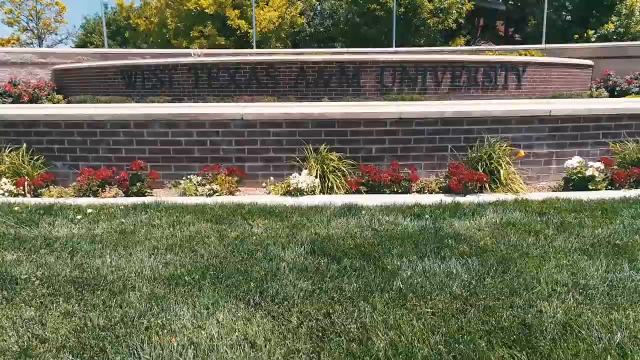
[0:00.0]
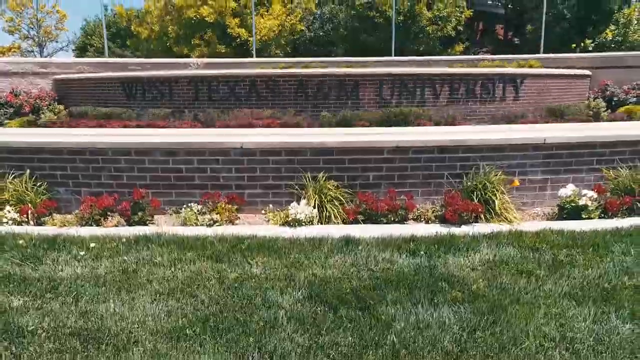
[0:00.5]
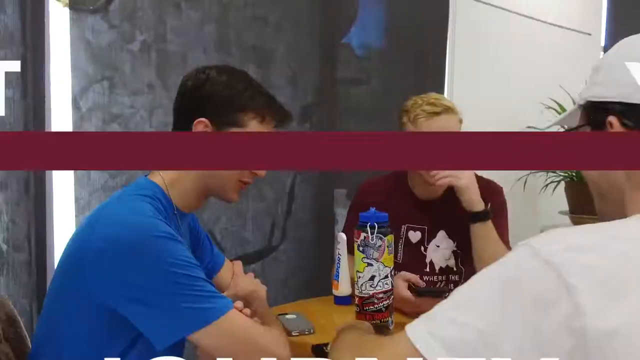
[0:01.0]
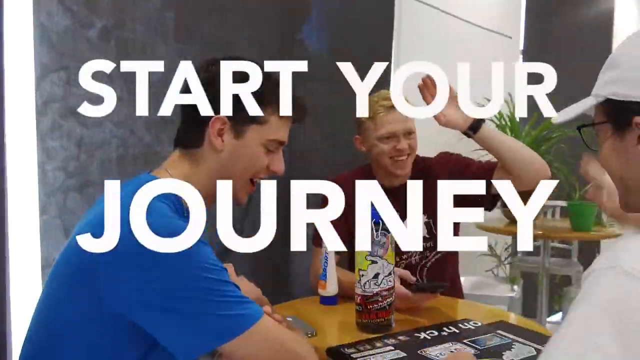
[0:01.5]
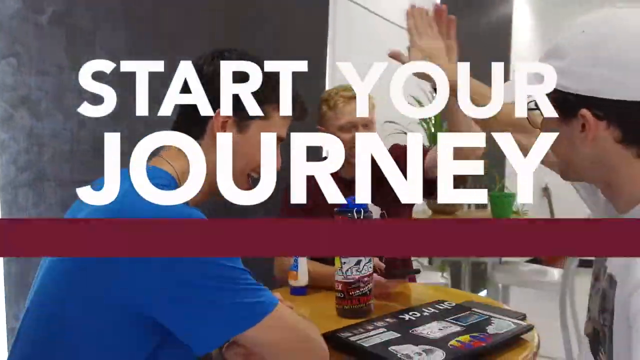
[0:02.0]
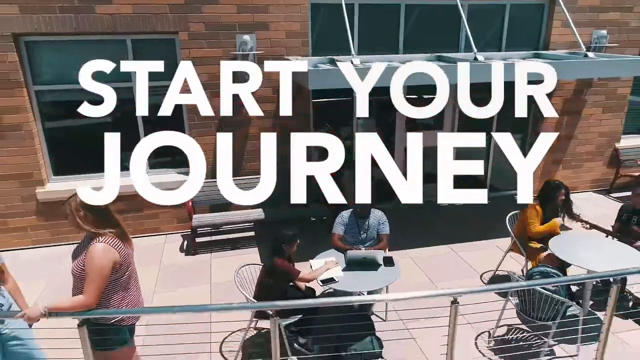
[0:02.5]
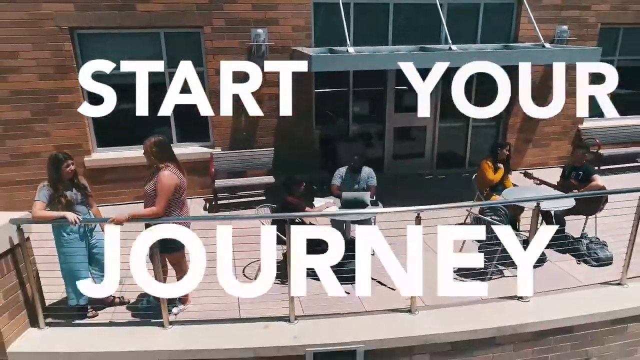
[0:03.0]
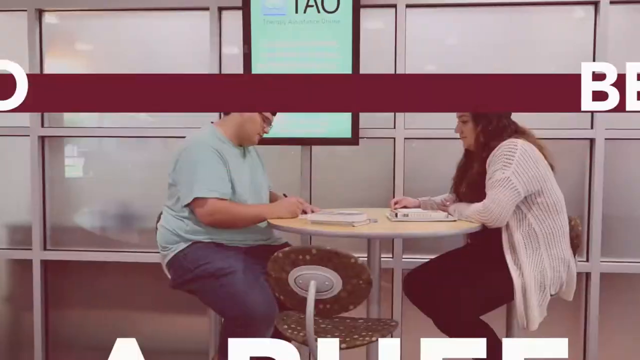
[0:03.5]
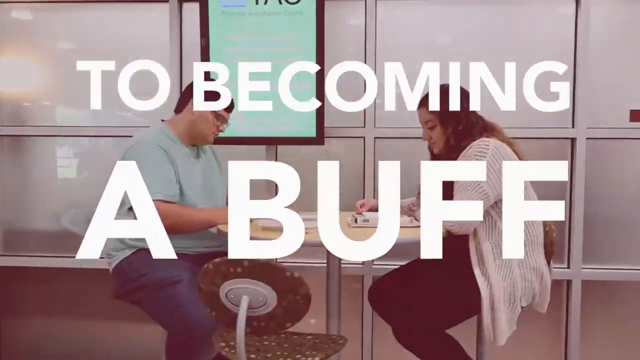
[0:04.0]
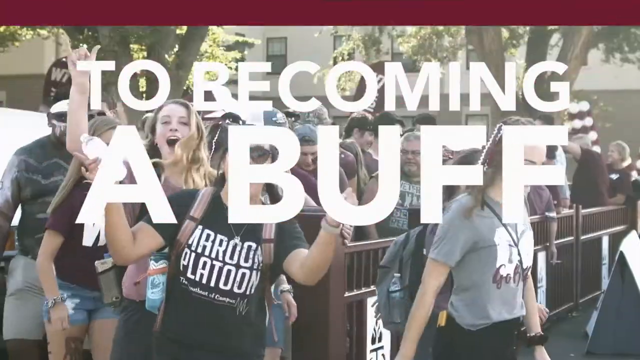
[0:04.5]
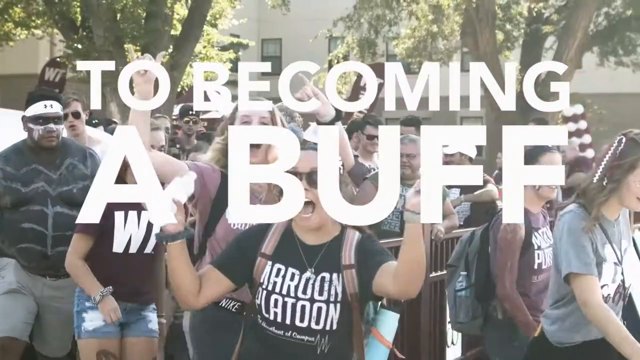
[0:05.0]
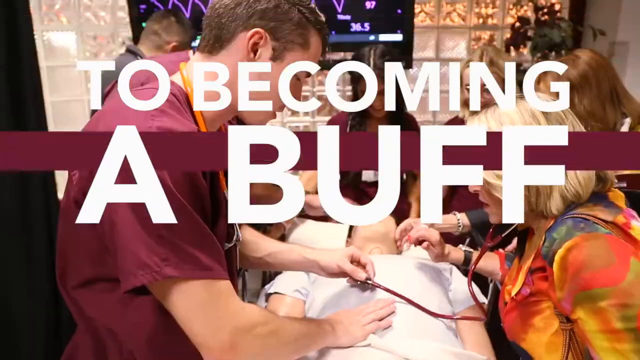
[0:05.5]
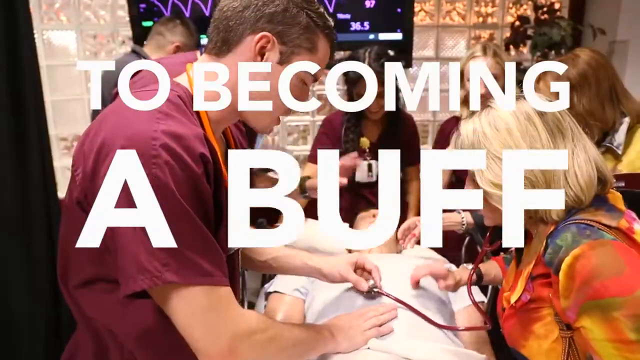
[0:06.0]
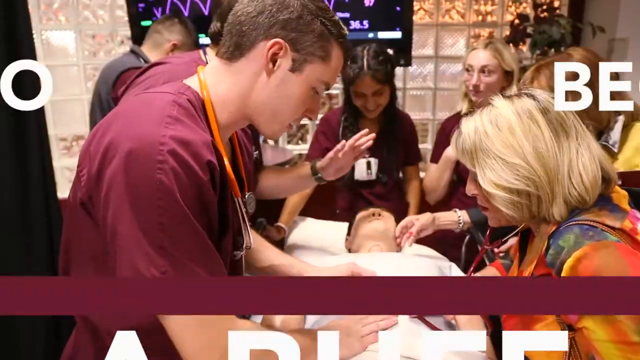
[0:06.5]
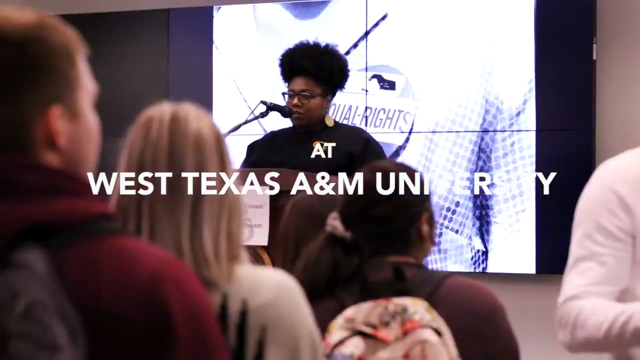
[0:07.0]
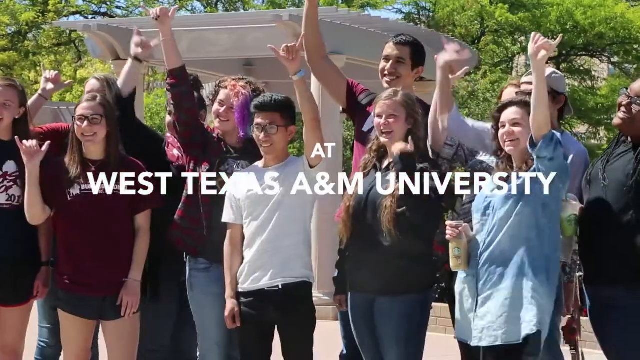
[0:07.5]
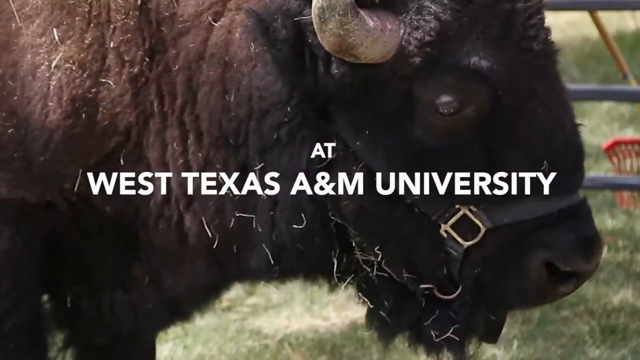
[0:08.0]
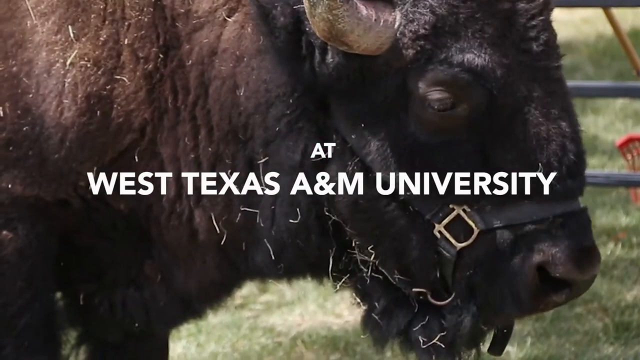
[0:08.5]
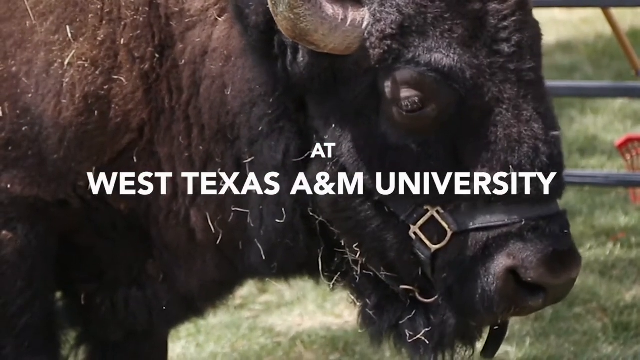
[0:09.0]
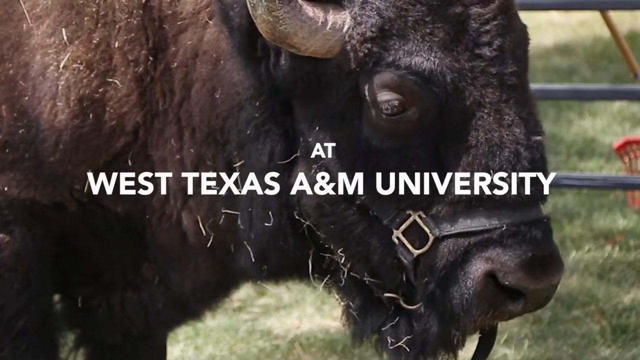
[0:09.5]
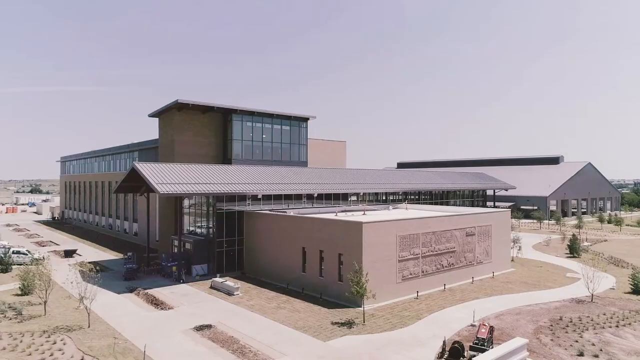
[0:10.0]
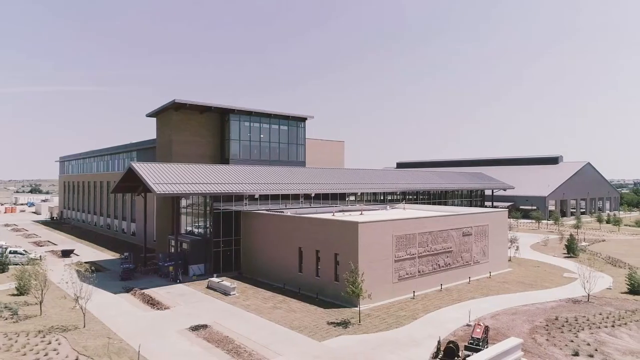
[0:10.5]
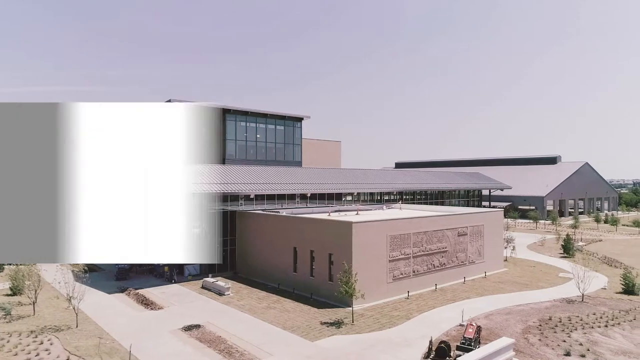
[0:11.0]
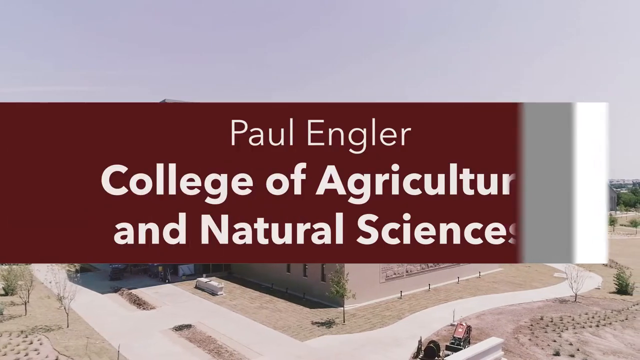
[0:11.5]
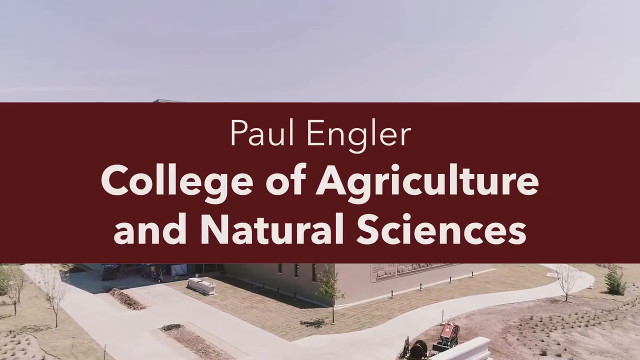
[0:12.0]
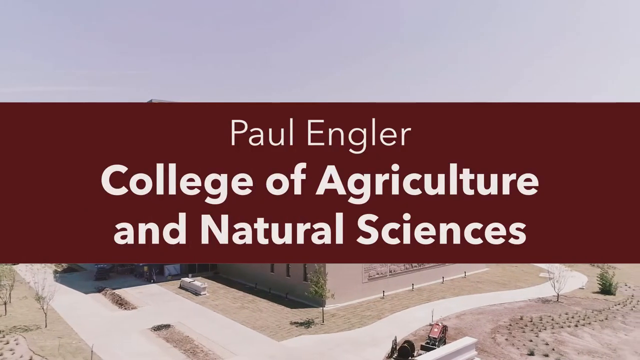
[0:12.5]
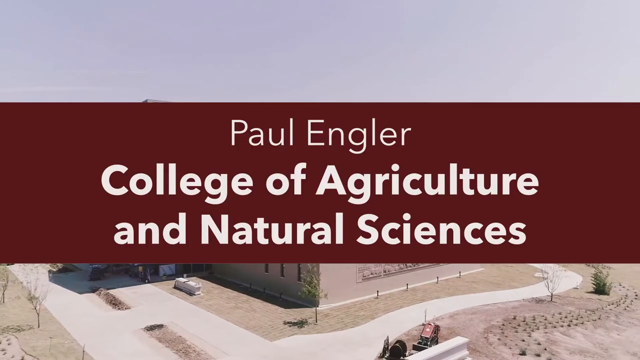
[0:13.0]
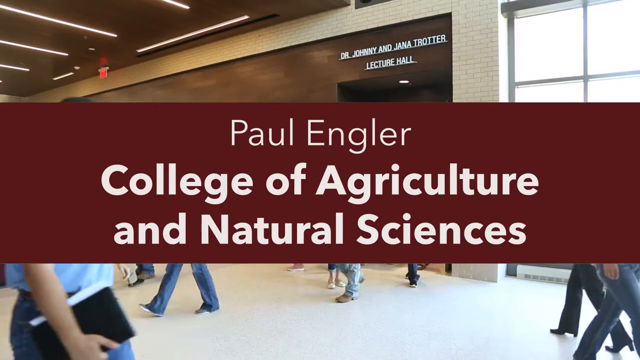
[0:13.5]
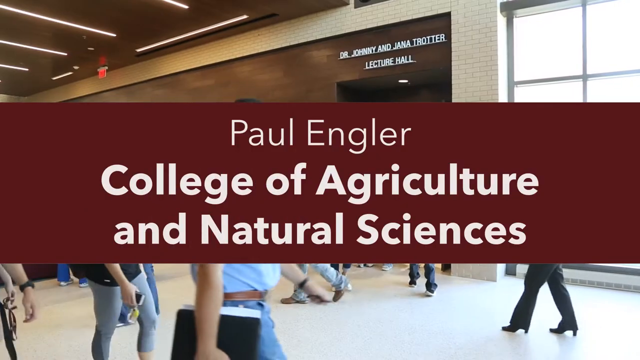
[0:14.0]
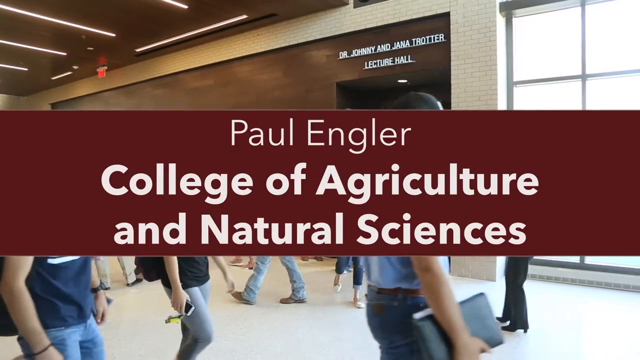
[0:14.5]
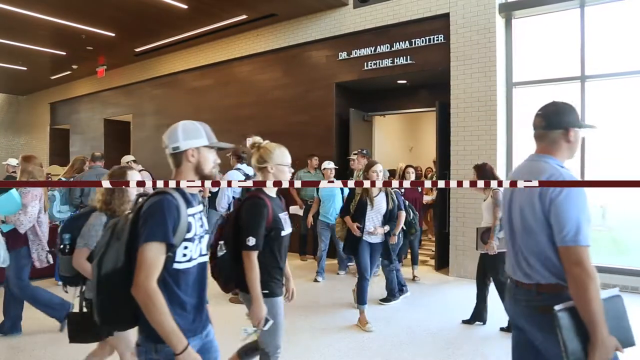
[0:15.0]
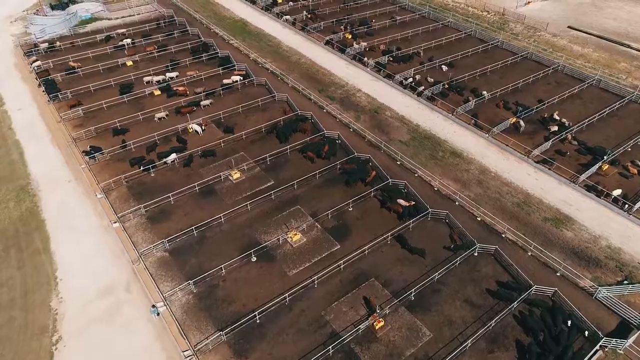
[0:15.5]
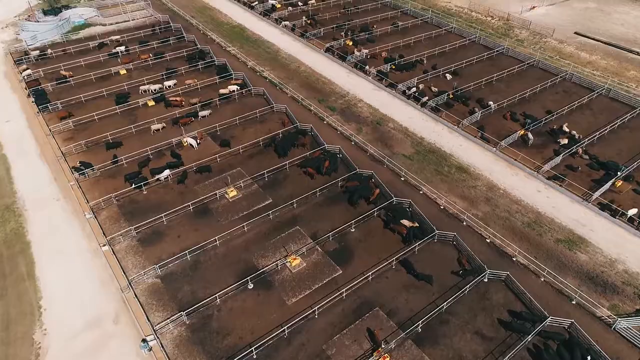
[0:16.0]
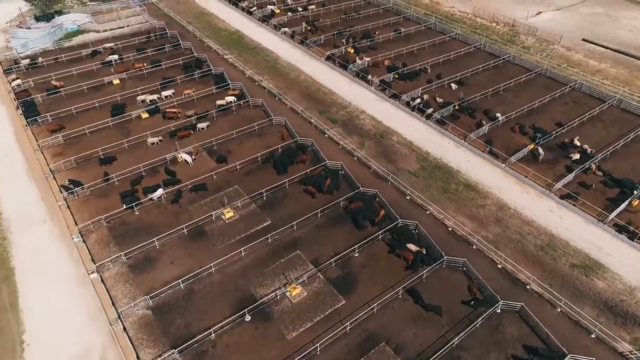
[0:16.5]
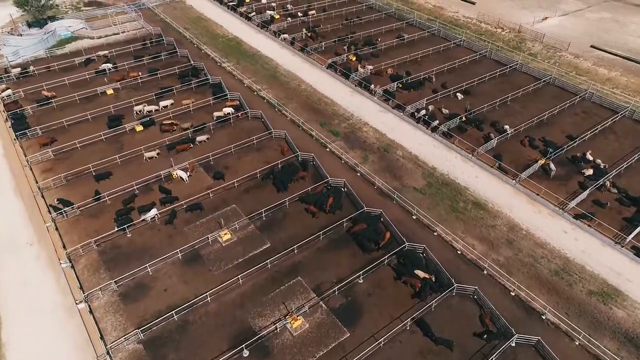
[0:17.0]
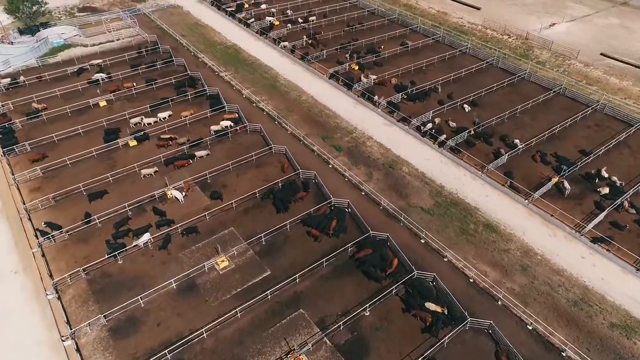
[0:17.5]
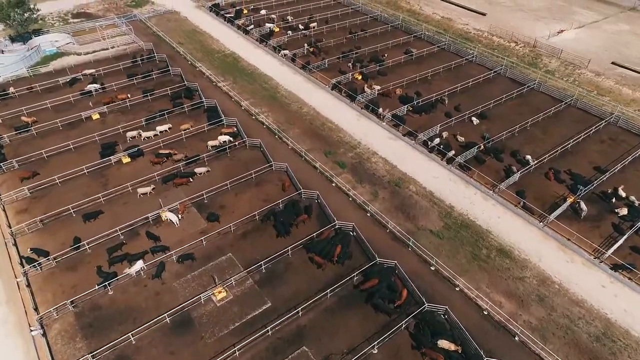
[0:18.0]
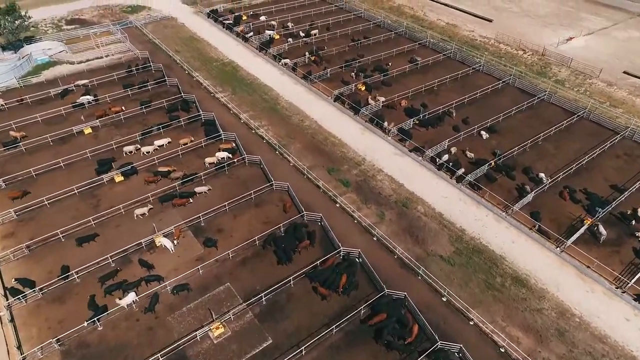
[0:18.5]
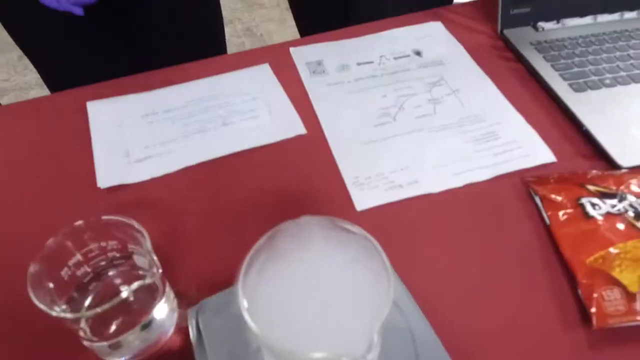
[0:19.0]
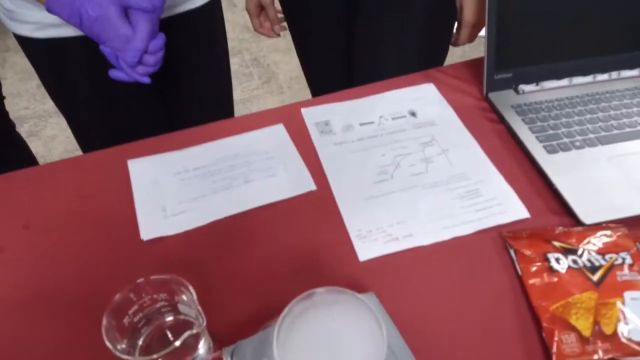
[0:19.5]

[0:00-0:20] The front landscaping and title sign for West Texas A&M University appear. A well-kept lawn fills the immediate foreground in the lower third of the screen. In the mid ground, flowers and plants are planted just in front of a brick wall that leads to a higher elevation, which seems to be another level of planting, leading to another brick wall bearing the lettering "West Texas A&M University." The drone starts to go upward, and the video suddenly cuts to three smiling students, with white overlay lettering reading "start your journey." The student furthest to the left, a Caucasian male with black hair in a blue t-shirt, smiles while looking down at his work. Another Caucasian male, blonde and wearing a maroon t-shirt, raises his left hand, which has a wristwatch on it, about to give a high five to the student furthest to the right. That student's face can't be seen; he wears glasses and a white baseball cap, has black hair, and appears to be Caucasian. The blonde student high-fives the student in the baseball cap. The video cuts to an exterior shot of an eating or lounging area with outdoor tables and outdoor furniture, where four students are visible. The camera zooms out, as if in a drone shot from above, revealing a total of six students: one on the far right holding a guitar, two talking, two sitting, and two more sitting in the center. Another shot carries the lettering "becoming a buff," and two students study at a table. The shots are rapid. A montage shows many students wearing various t-shirts; one student in the foreground wears a black t-shirt that says "maroon platoon," even though it is not maroon. What appear to be medical or nursing students examine a simulated patient, a mannequin. A quick shot shows a lecturer or guest speaker, a slightly heavyset black woman with a large upward afro, along with the lettering "West Texas A&M University." Behind her is a video screen, or video wall, showing someone wearing a patch that says "equal rights." Apparently five or six students are visible in frame listening to her lecture, and she is at a podium with a microphone. A quick shot shows a group of apparently 12 students, all raising their hands and smiling. Next is a picture of what looks like a bull or maybe a bison that seems quite content, taking up most of the frame and looking toward the right side of the screen. The video cuts to a shot of architecture that looks like a student hall of some sort. A text graphic rolls across from the left: a maroon band with white block sans serif lettering reading "Paul Engler, College of Agriculture and Natural Sciences." It then cuts to an aerial tracking drone shot above a large number of side-by-side pens or partitions for horses or other livestock. Next is an interior shot of a table with a maroon tablecloth and some type of lab experiment that smokes like dry ice, with a laptop to the side and some students wearing lab gloves. The camera shoots from above, rising upward.